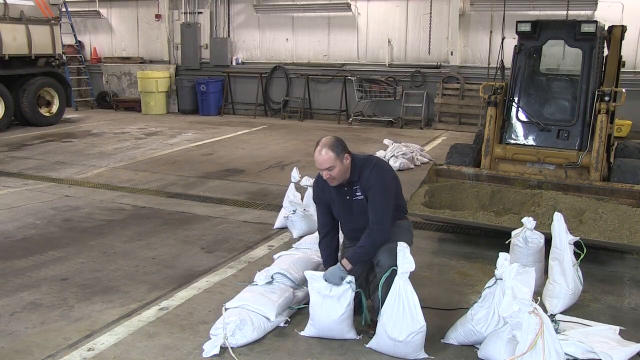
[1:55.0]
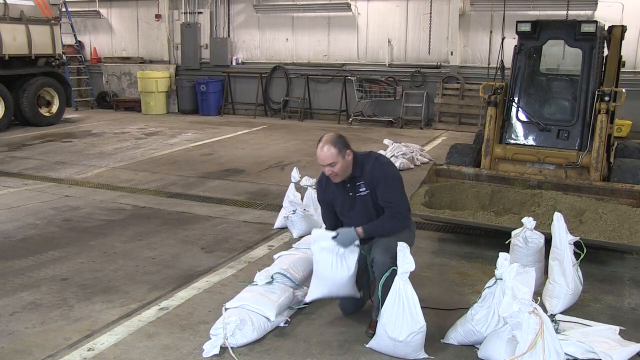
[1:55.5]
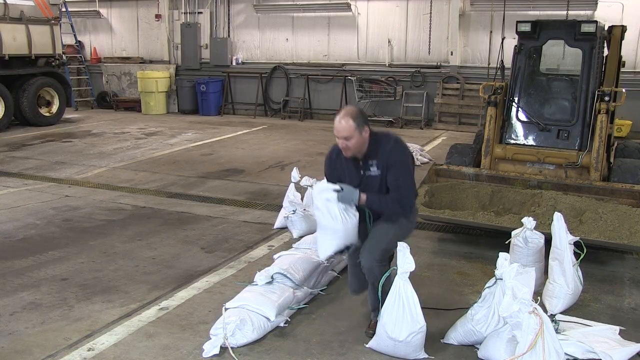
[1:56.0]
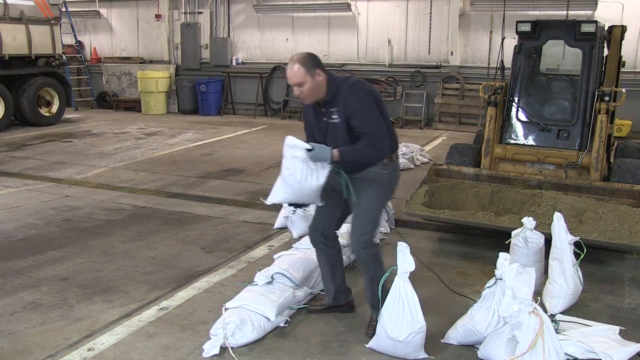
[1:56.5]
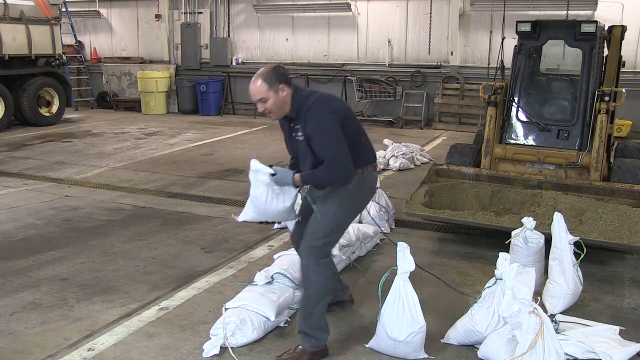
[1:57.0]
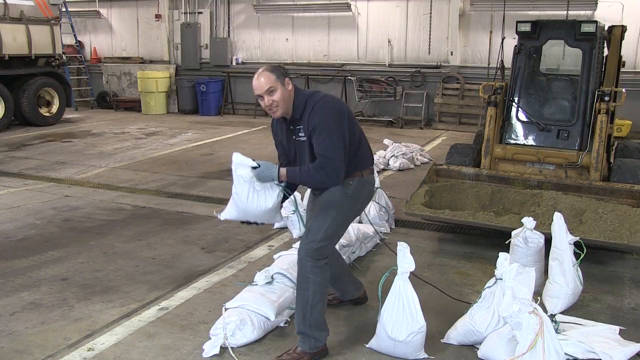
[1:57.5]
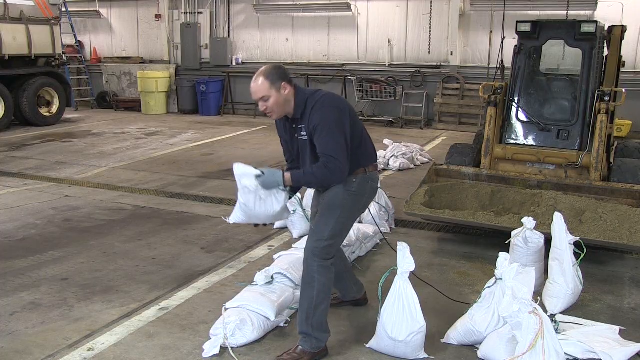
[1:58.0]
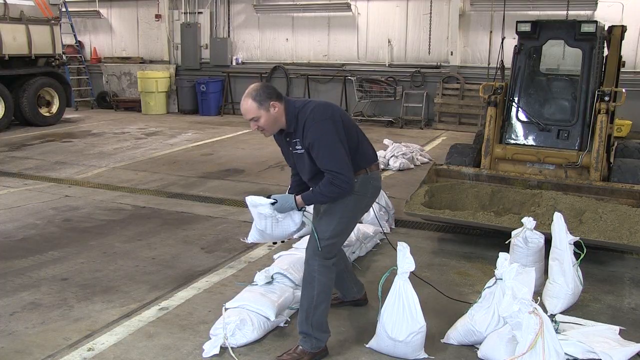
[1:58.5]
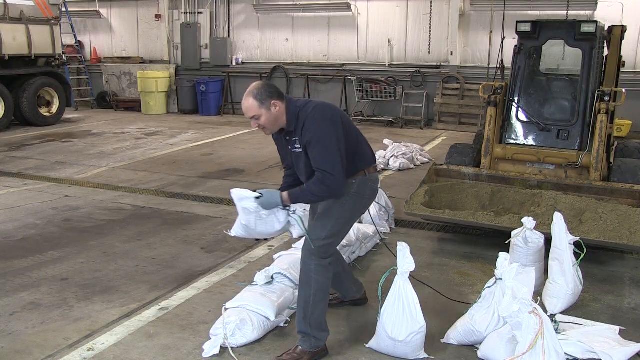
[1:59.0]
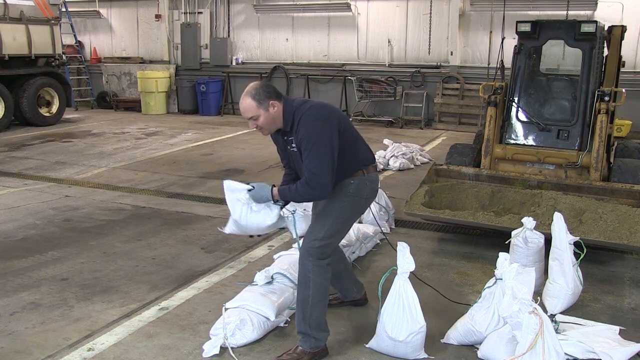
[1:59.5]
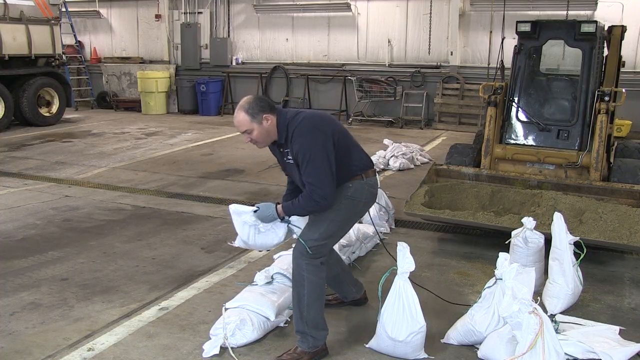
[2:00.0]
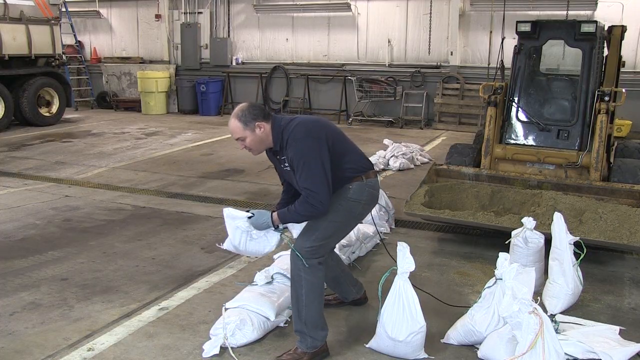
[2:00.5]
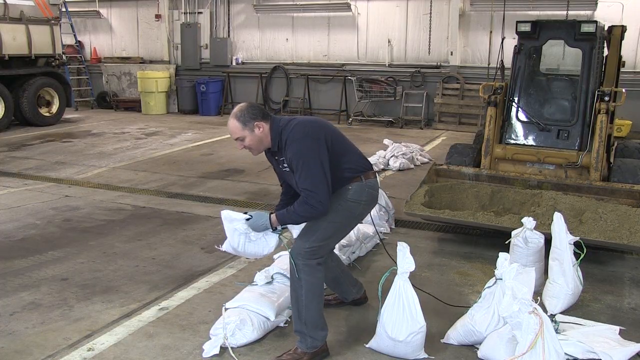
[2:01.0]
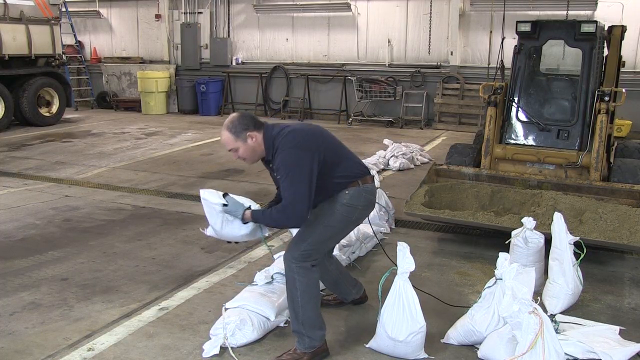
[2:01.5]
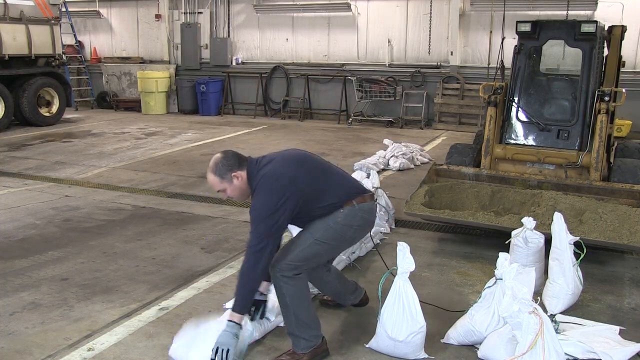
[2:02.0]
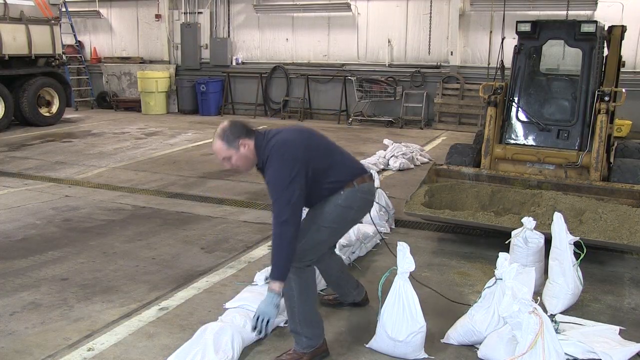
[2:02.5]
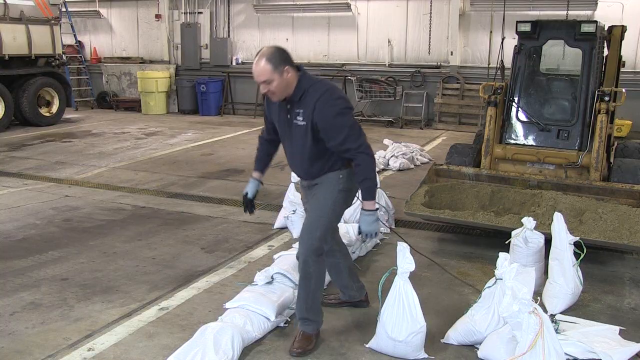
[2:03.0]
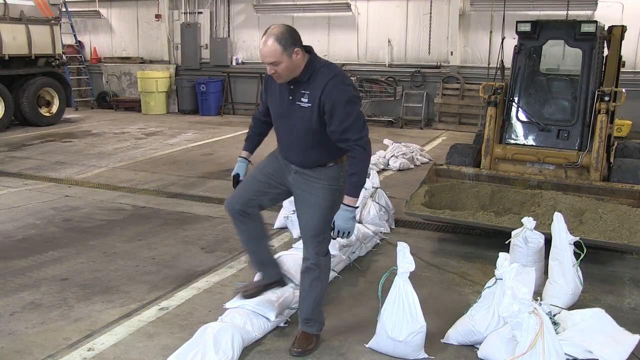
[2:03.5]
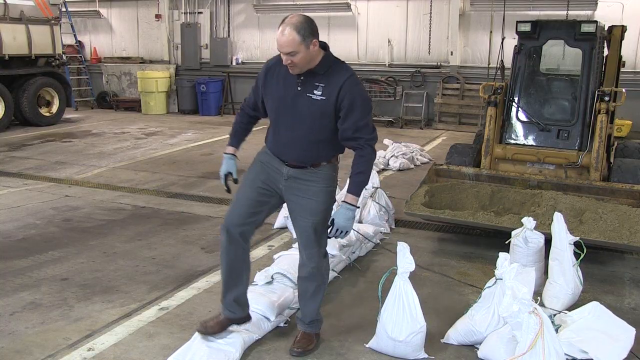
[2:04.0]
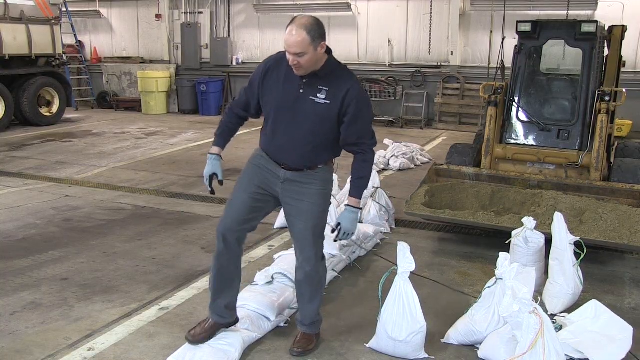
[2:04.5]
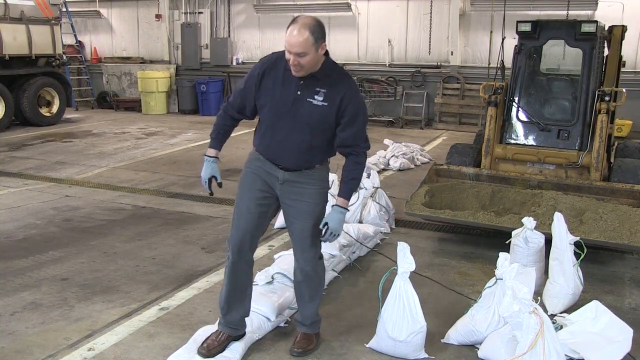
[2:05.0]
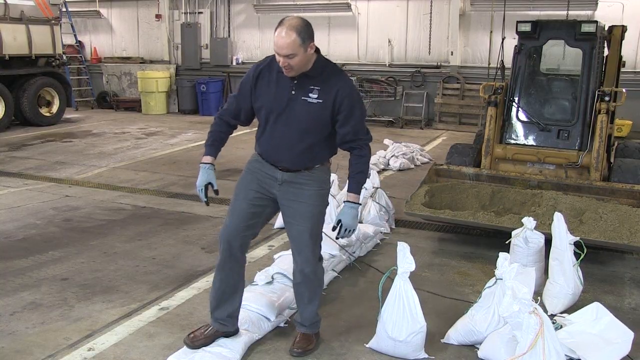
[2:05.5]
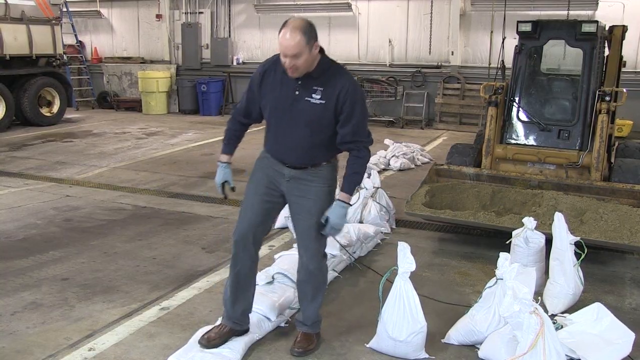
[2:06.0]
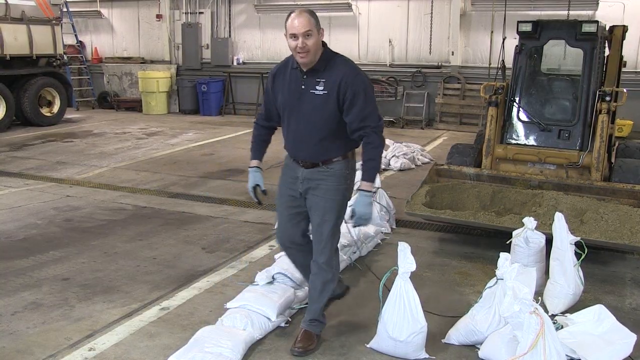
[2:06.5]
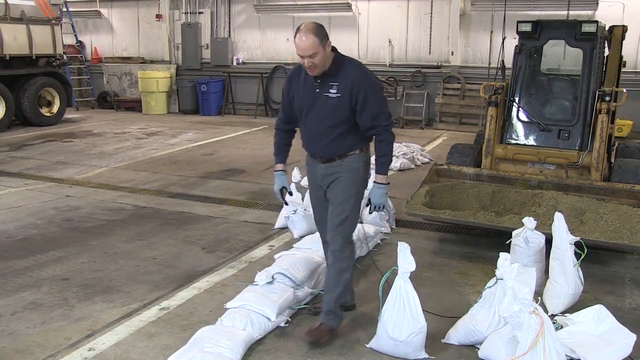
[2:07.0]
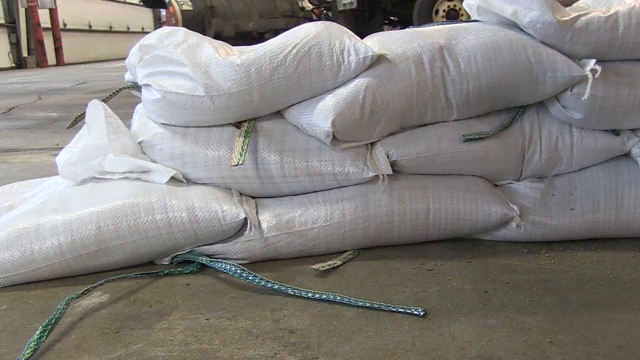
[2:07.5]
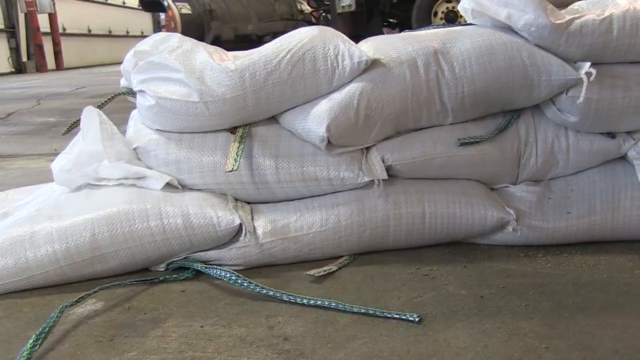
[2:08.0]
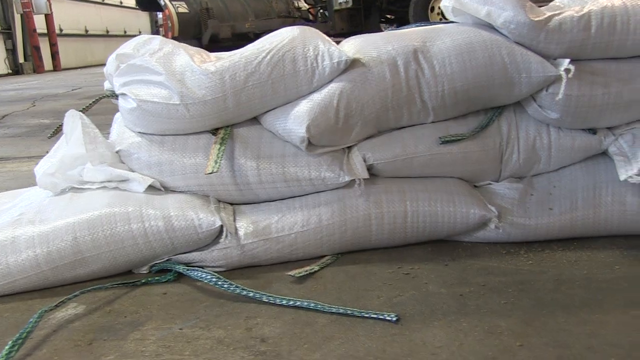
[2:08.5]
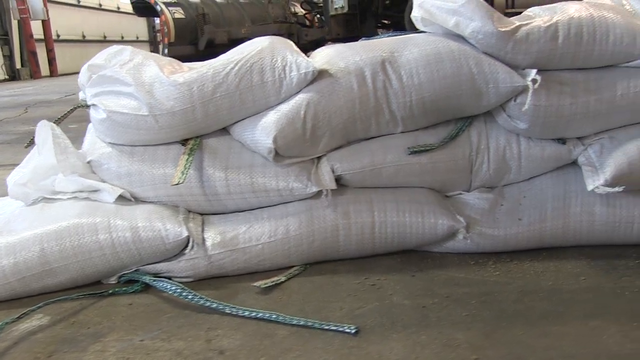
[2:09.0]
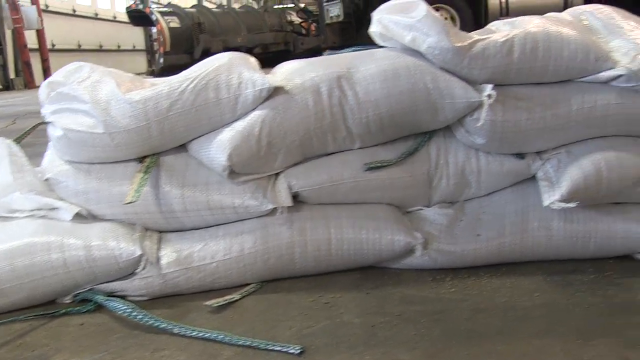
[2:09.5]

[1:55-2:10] In the warehouse, the speaker lays down sandbags in a formation to build a protective wall. He takes a sandbag and slams it horizontally down on the ground, slightly overlapping it on top of sandbags already placed, then stamps on it. He is talking. The video then switches to a panning shot of the growing wall of sandbags.